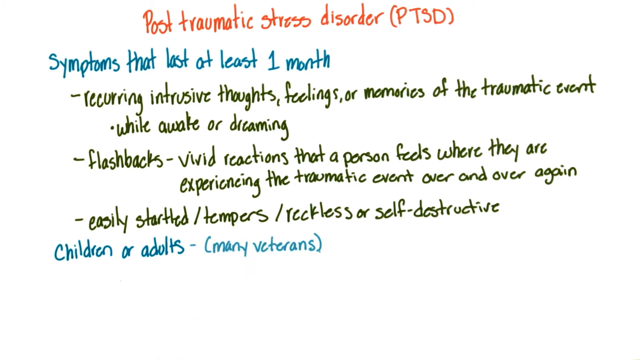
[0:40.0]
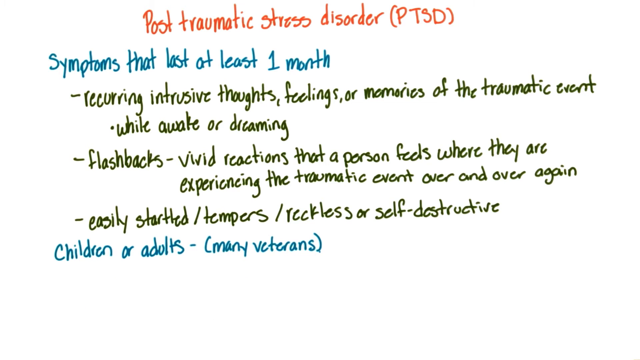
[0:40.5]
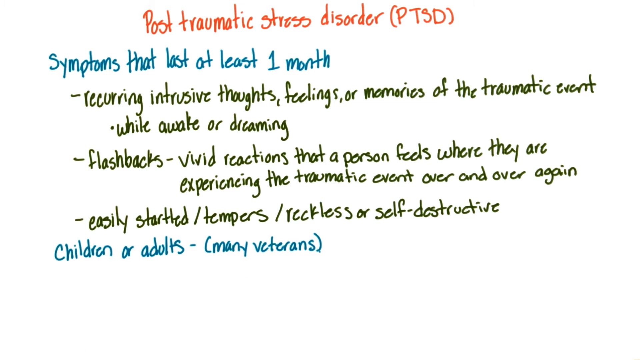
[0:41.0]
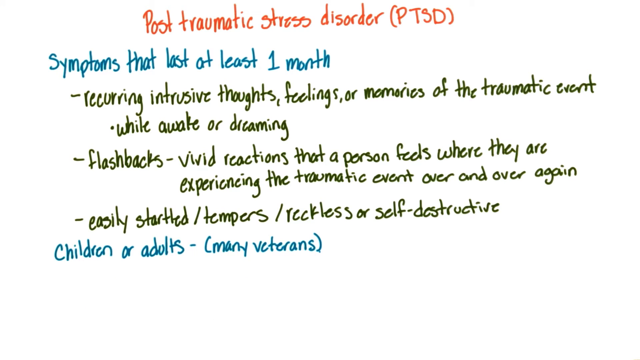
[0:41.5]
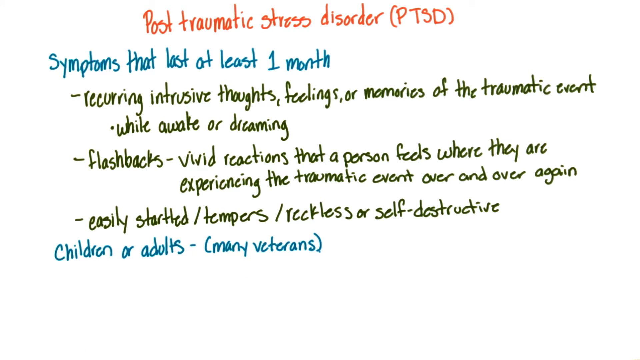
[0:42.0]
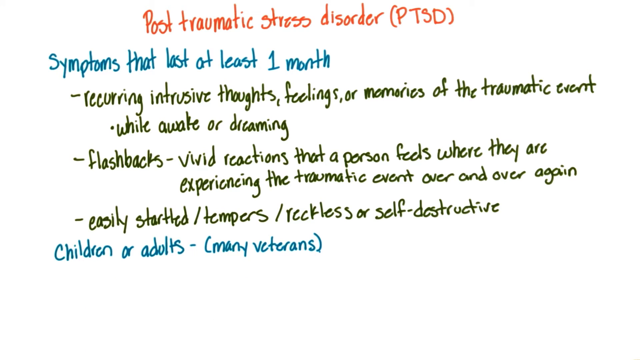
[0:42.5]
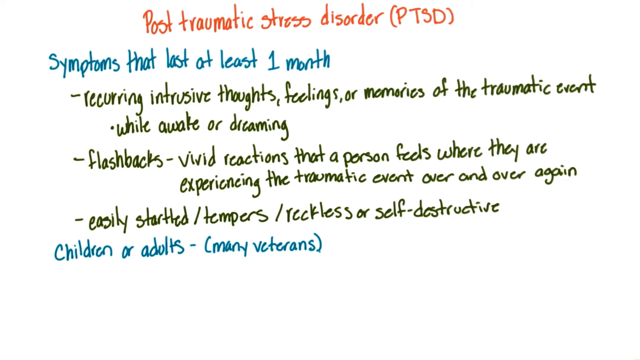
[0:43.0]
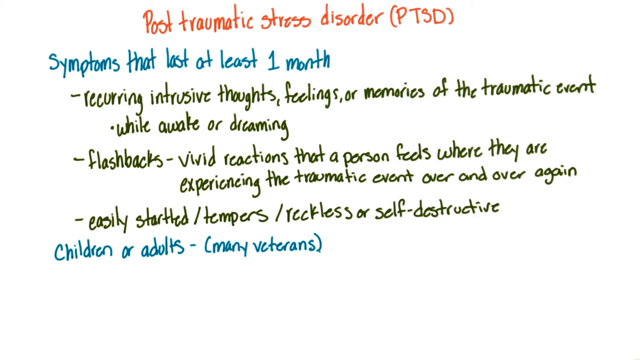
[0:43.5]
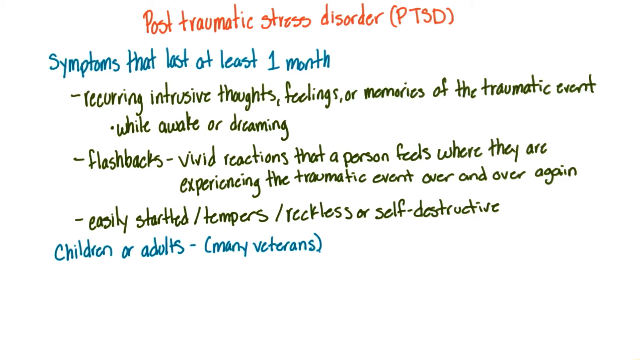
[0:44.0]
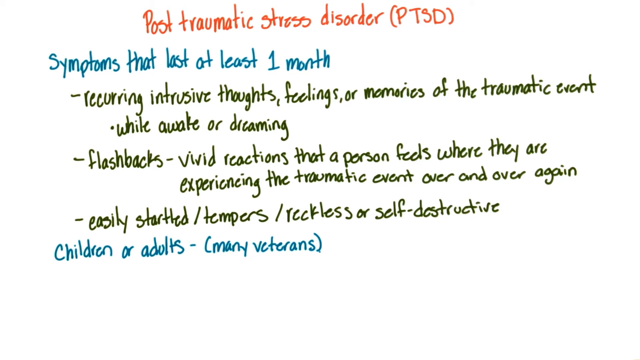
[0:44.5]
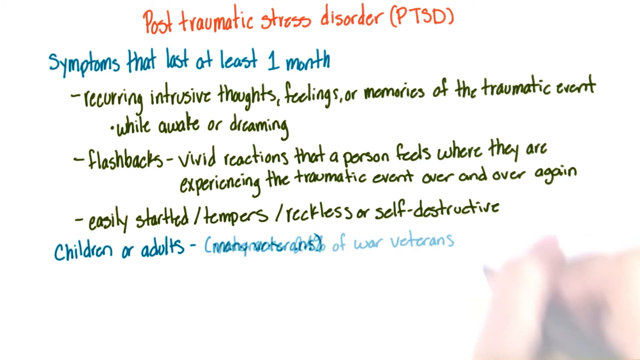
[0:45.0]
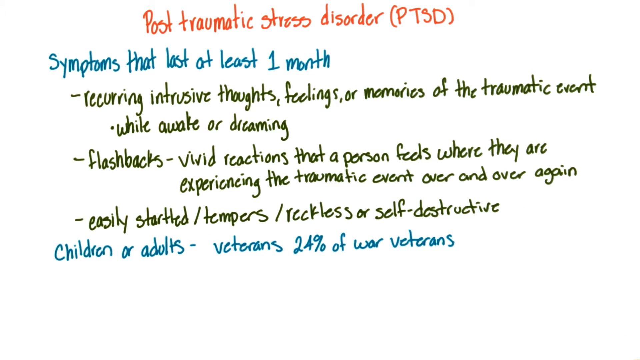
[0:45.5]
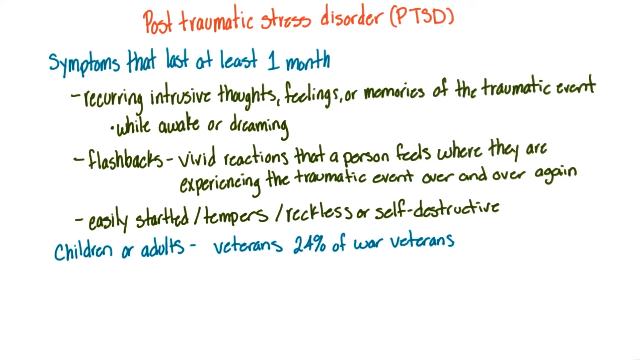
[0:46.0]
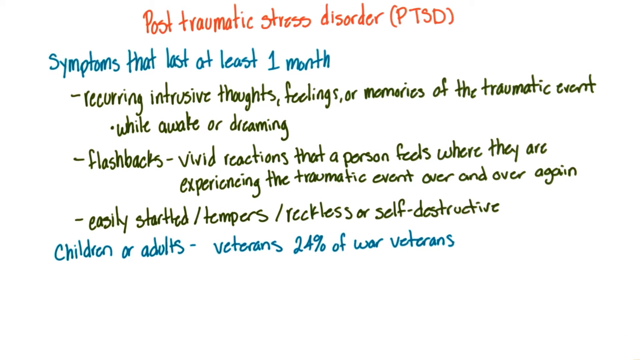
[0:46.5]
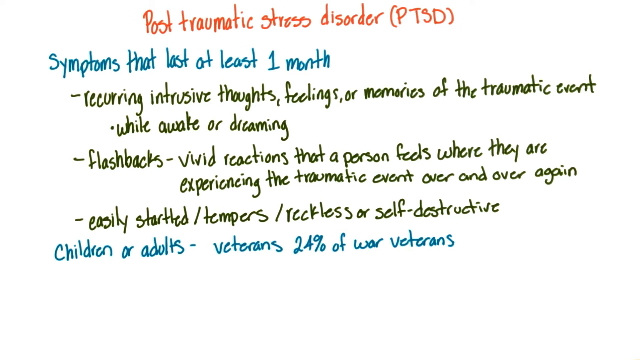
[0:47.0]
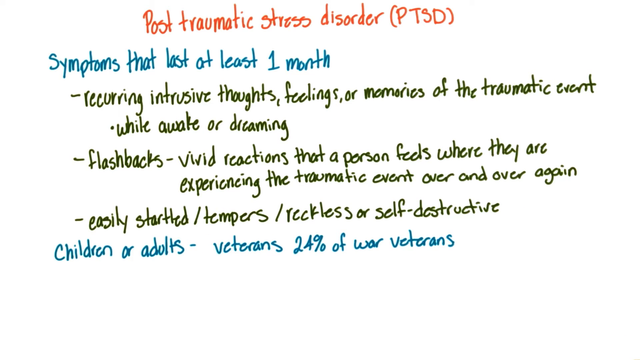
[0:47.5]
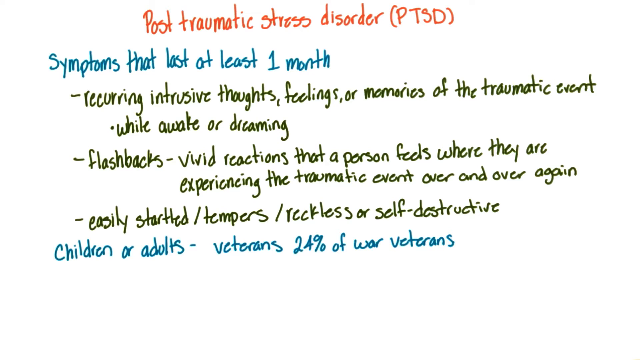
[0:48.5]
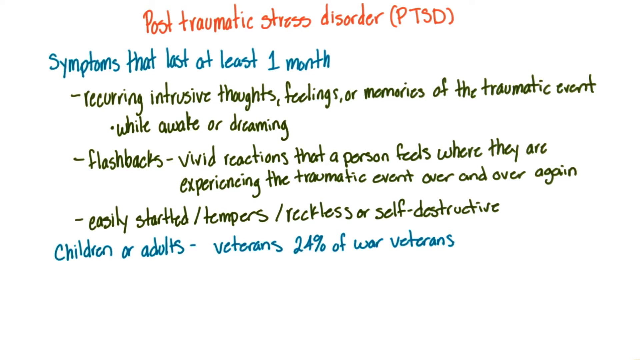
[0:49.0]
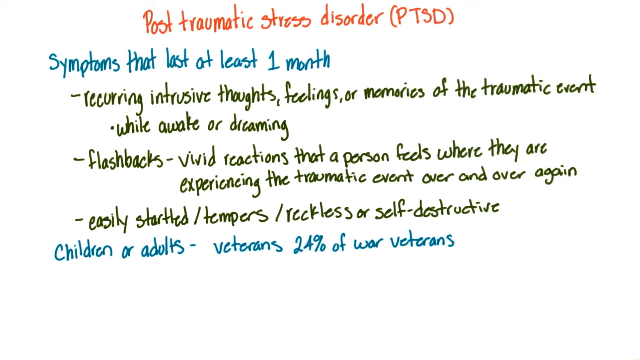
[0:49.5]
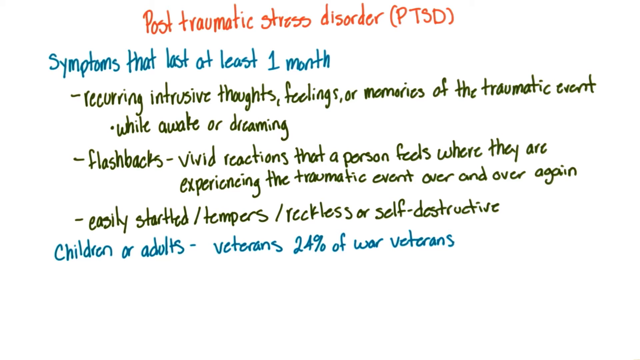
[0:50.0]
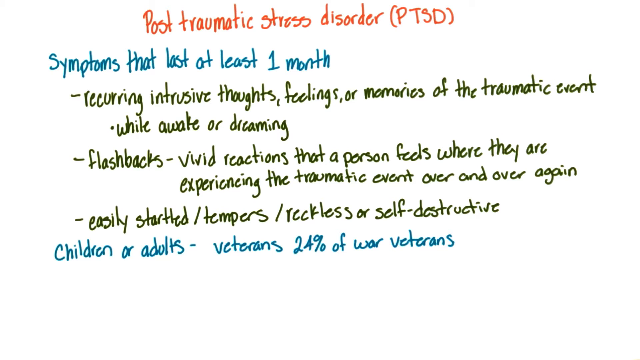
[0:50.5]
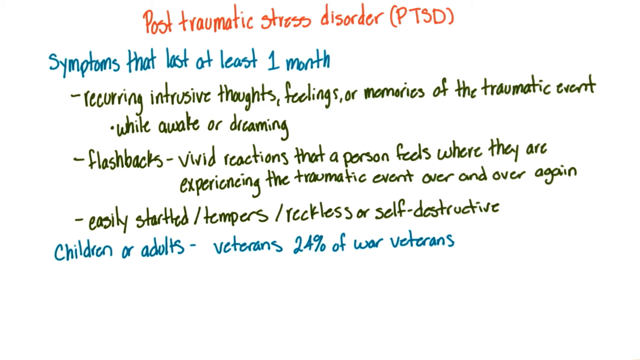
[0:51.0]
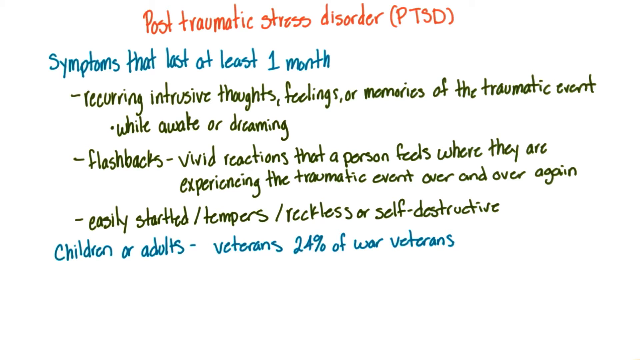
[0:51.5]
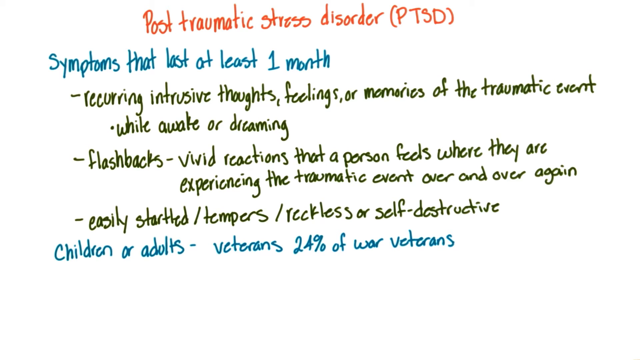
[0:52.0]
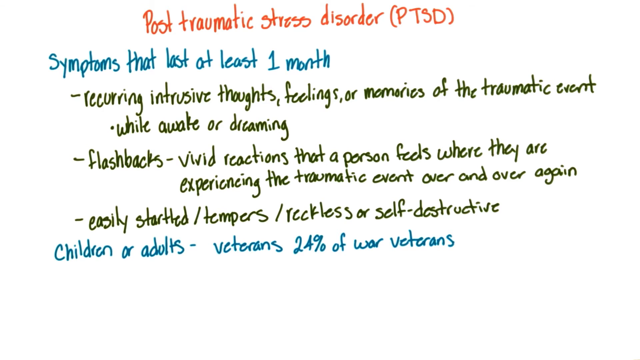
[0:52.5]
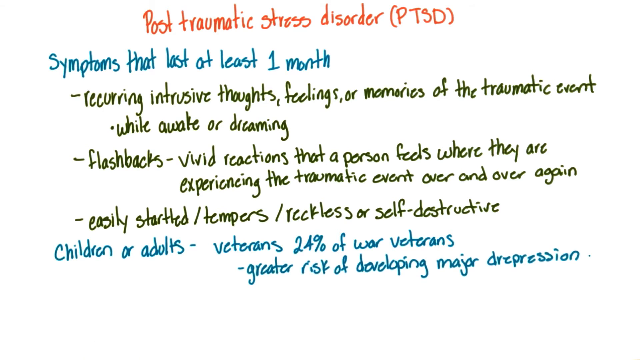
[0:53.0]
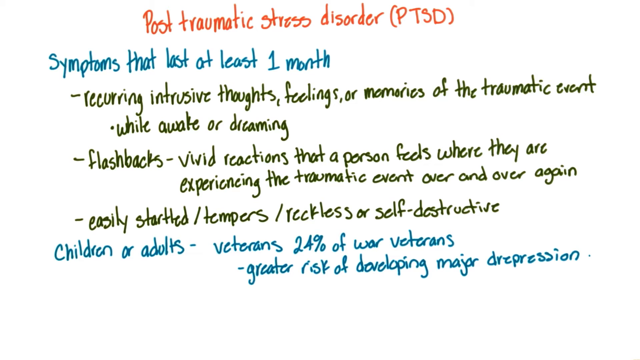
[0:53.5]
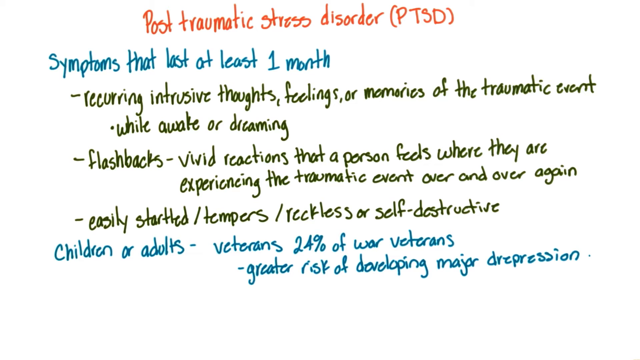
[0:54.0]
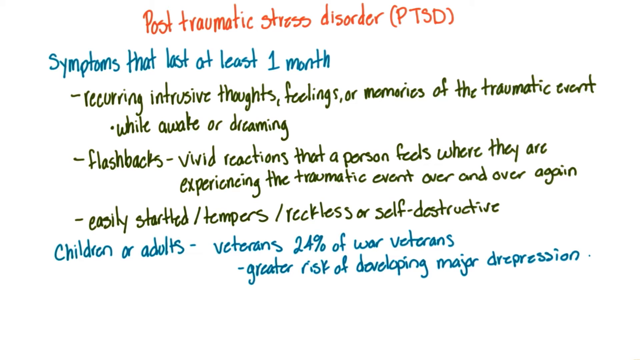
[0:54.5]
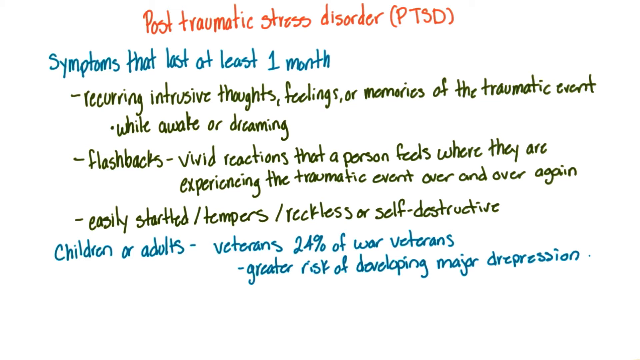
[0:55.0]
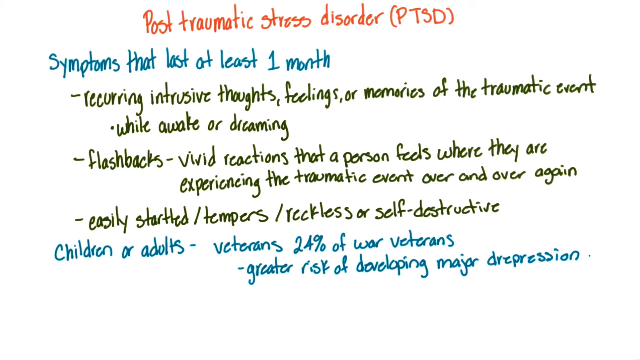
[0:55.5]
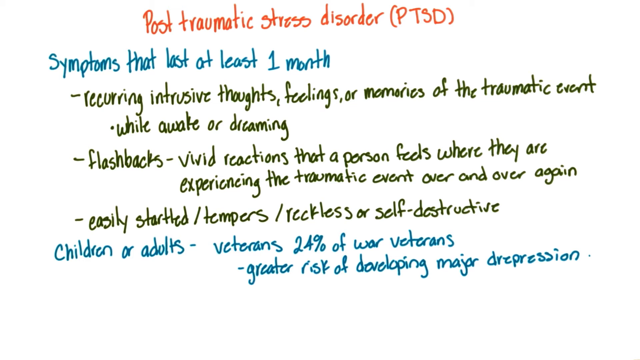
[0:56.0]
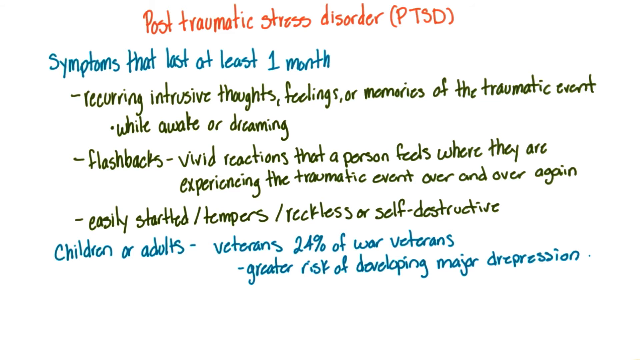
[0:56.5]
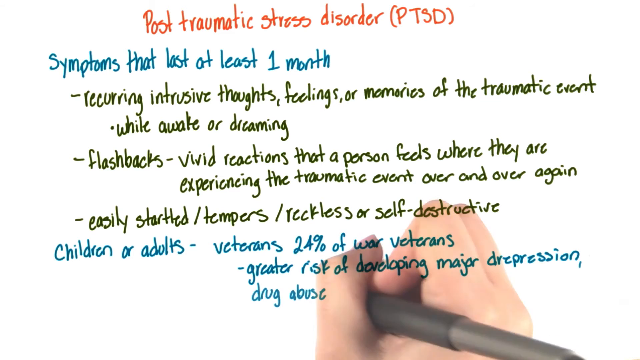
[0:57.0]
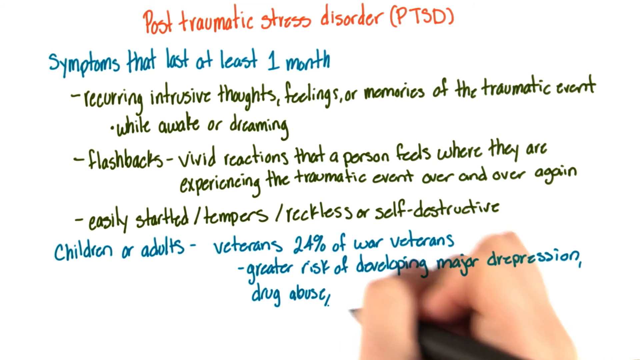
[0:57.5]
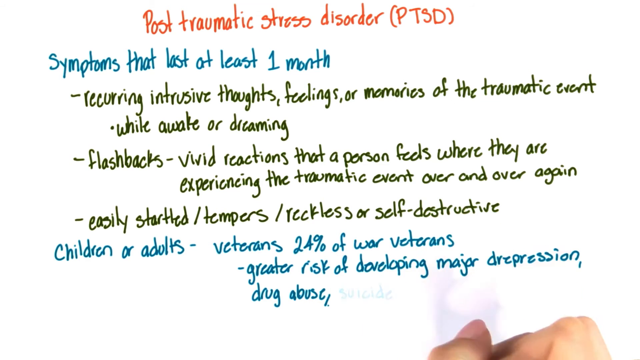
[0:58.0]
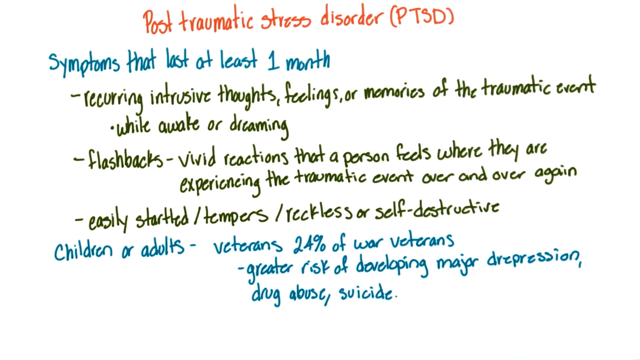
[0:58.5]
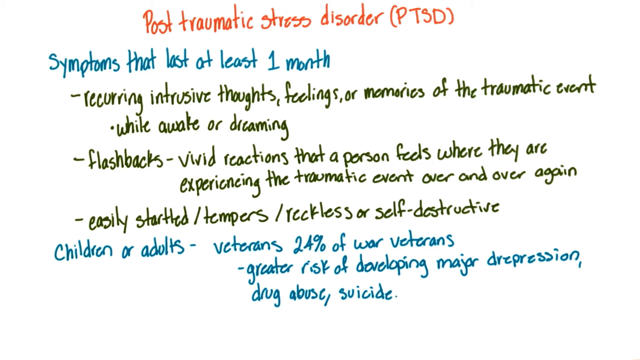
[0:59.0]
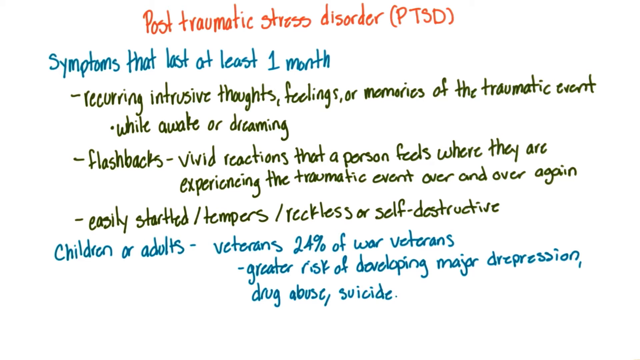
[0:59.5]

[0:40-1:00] The previously blue part has changed and now reads "children or adults - veterans 24% of war veterans," with the hand shown writing just the "s" before going off the bottom of the screen. Underneath, right under "veterans," a small dash reads "greater risk of developing major depression," also in blue. The hand is seen finishing a little of this writing, about two letters, slightly shifted to the right. The bullet point underneath the top black line is shifted about four letters over. The background is white, and the text is almost all in small lettering except the beginning of the blue. At the top, in red and well centered, is "post-traumatic stress disorder" with "PTSD" in all capitals in parentheses. The lower text starts shifted about two words to the left and begins with the blue.